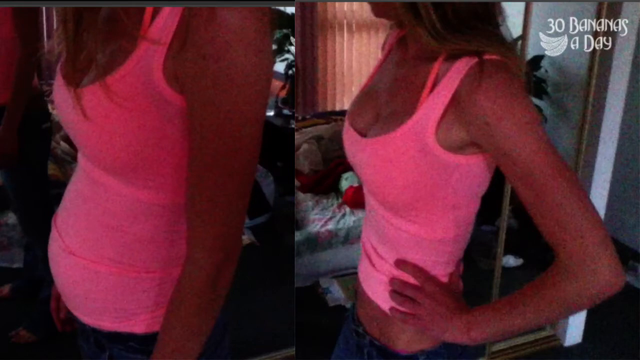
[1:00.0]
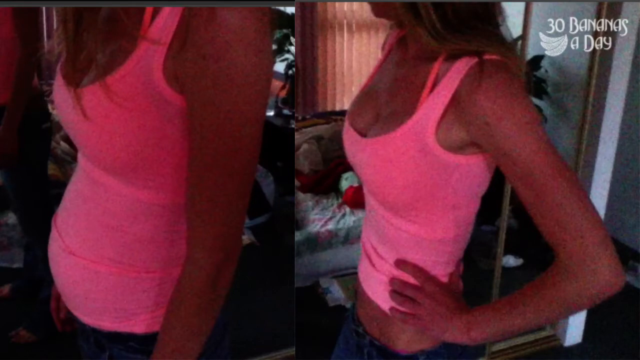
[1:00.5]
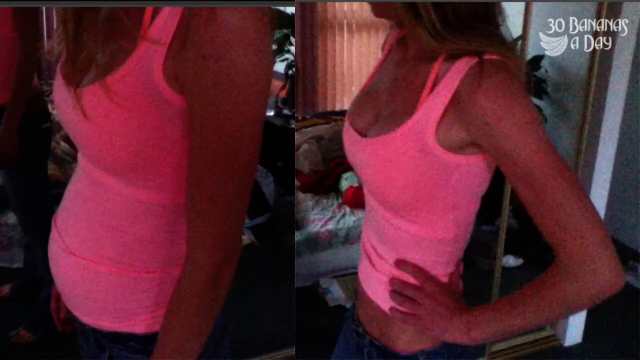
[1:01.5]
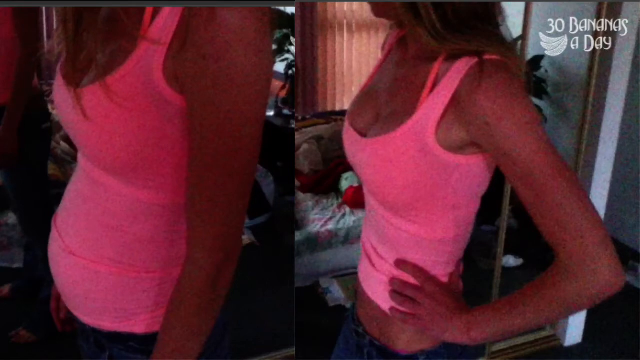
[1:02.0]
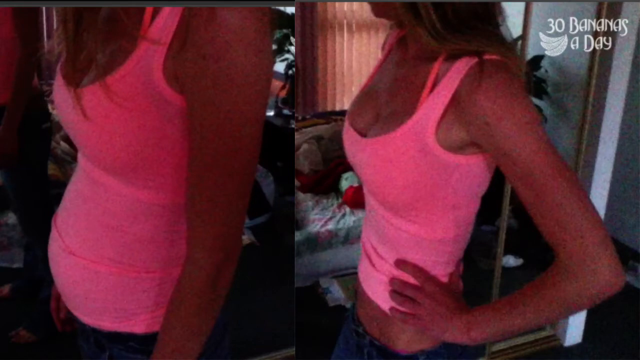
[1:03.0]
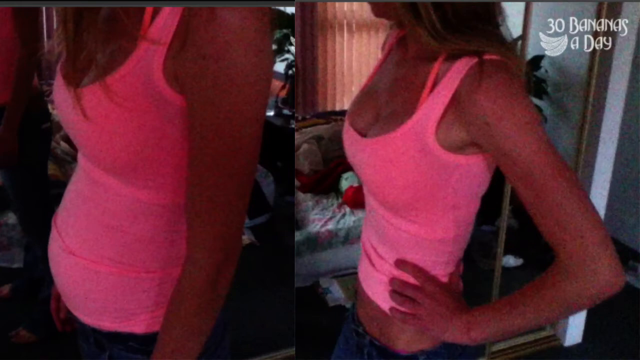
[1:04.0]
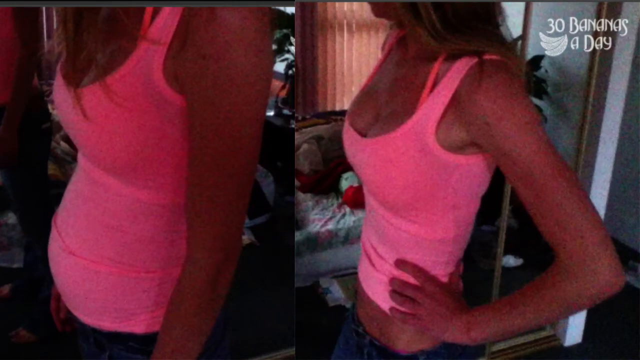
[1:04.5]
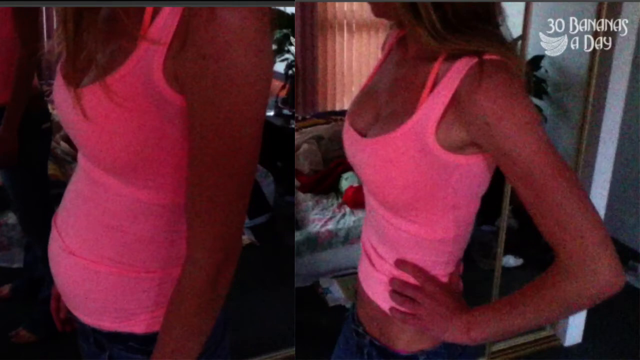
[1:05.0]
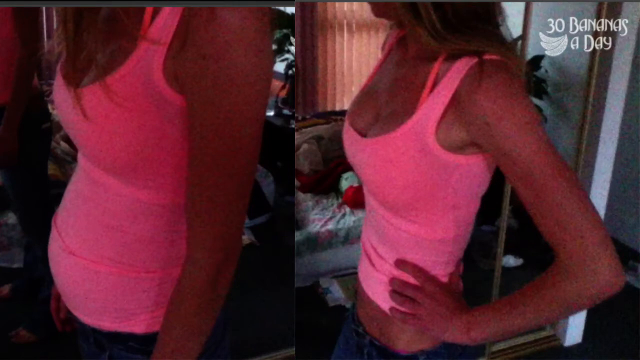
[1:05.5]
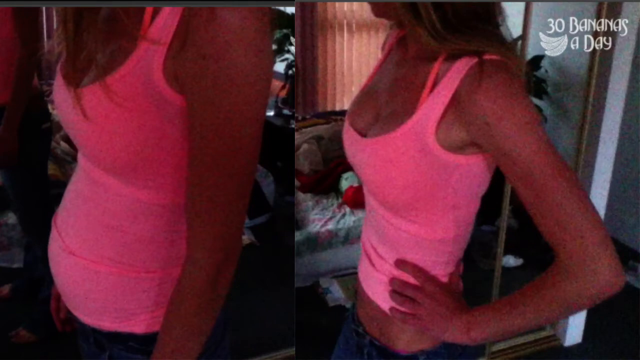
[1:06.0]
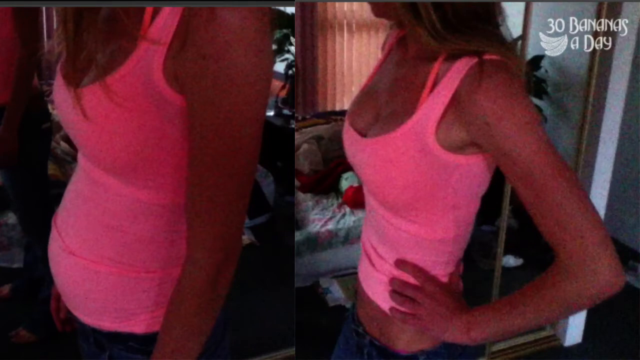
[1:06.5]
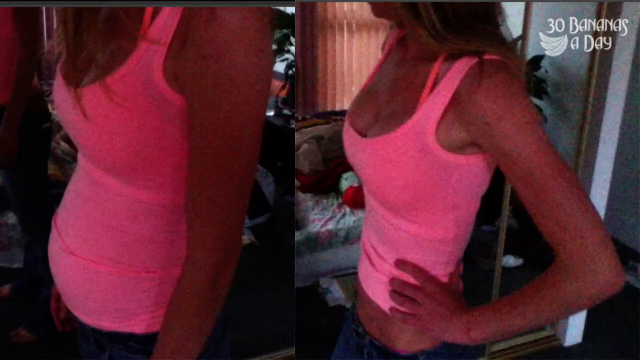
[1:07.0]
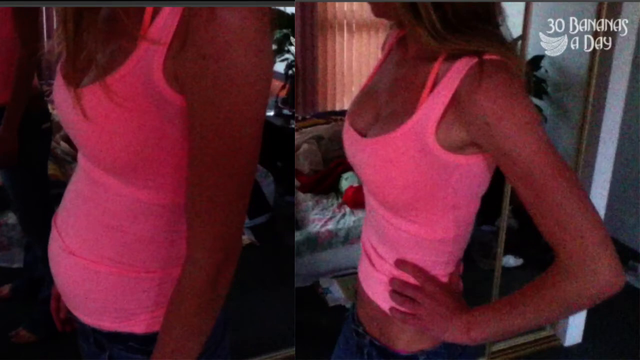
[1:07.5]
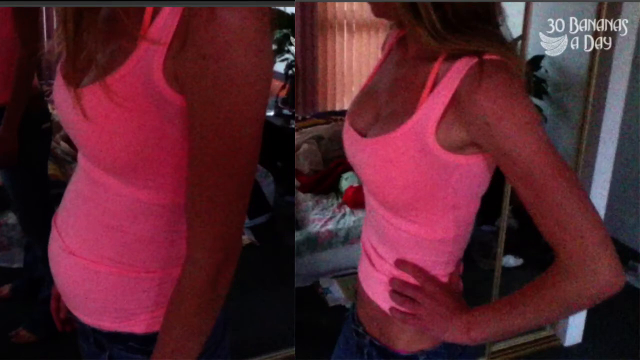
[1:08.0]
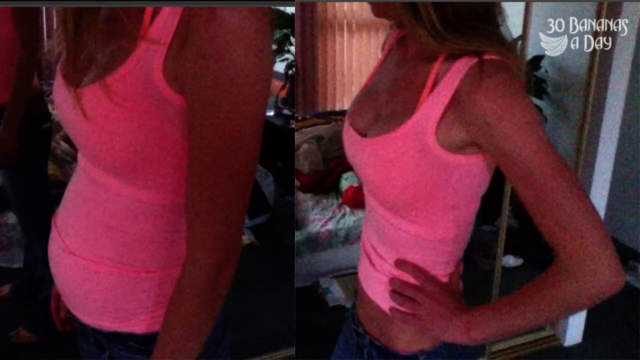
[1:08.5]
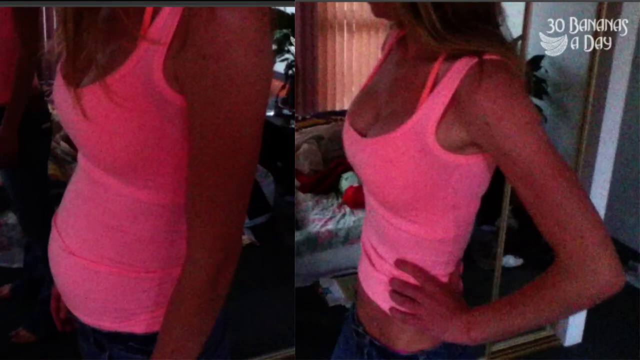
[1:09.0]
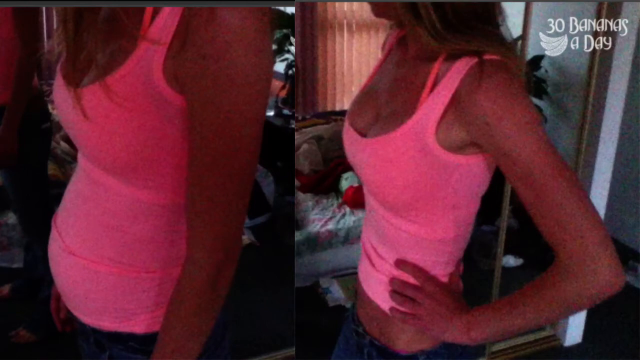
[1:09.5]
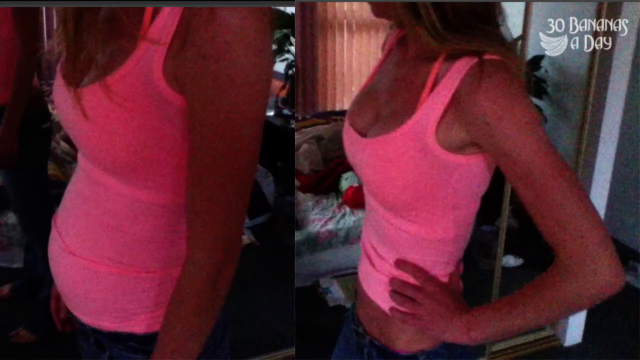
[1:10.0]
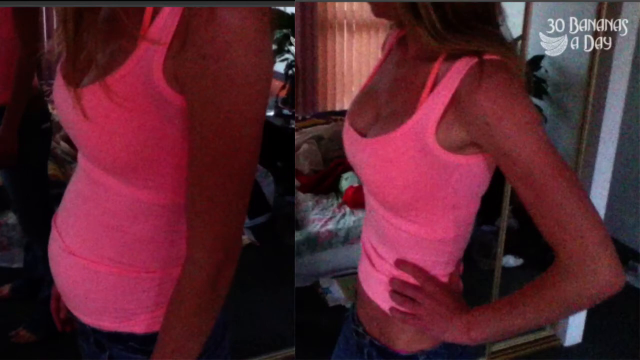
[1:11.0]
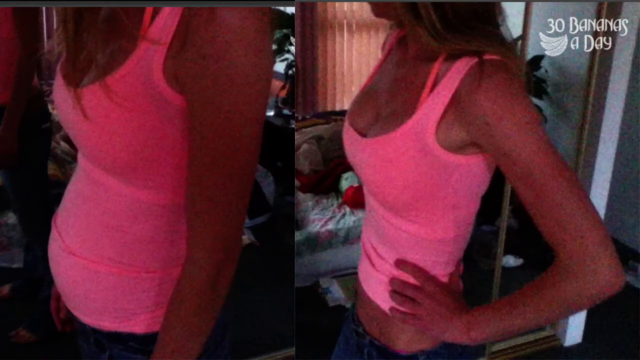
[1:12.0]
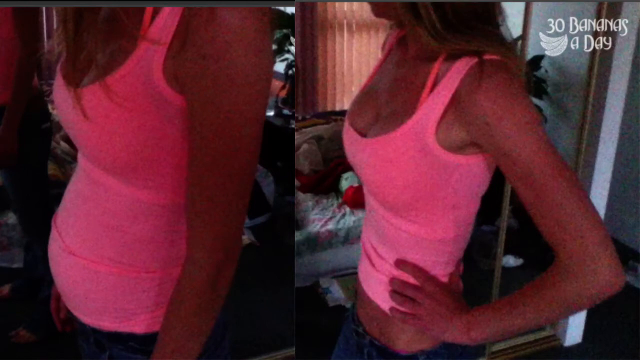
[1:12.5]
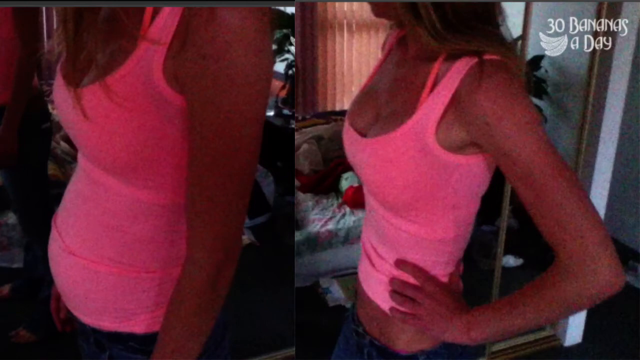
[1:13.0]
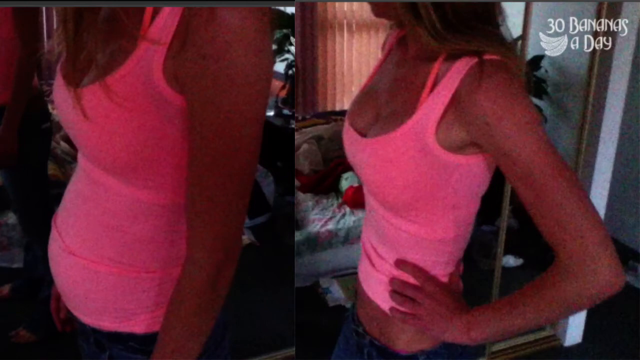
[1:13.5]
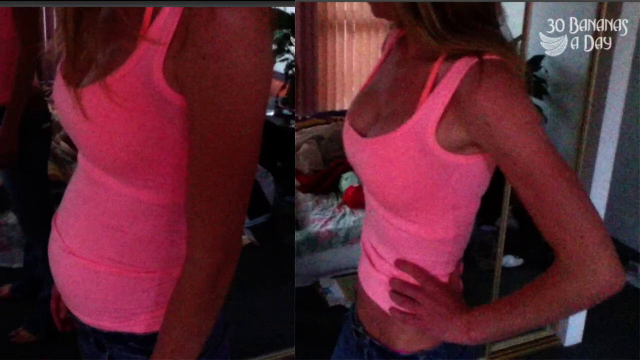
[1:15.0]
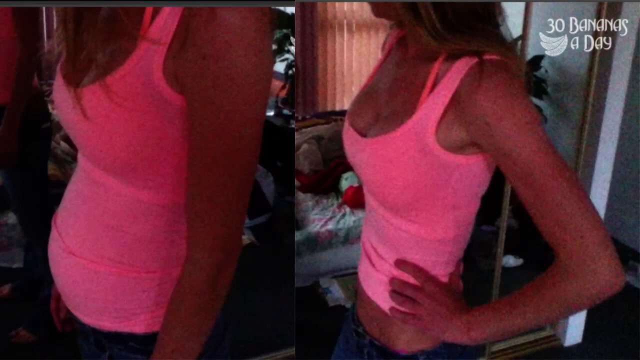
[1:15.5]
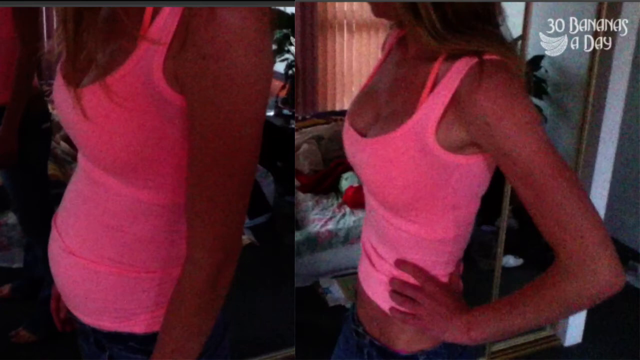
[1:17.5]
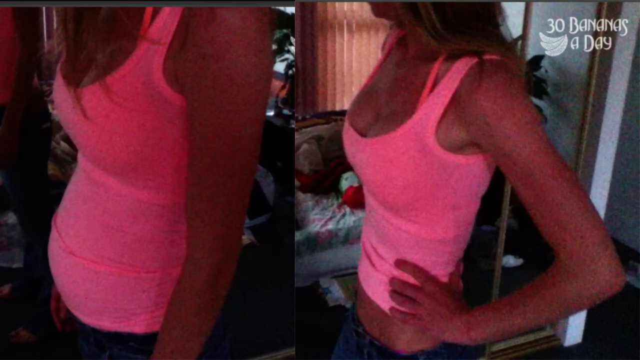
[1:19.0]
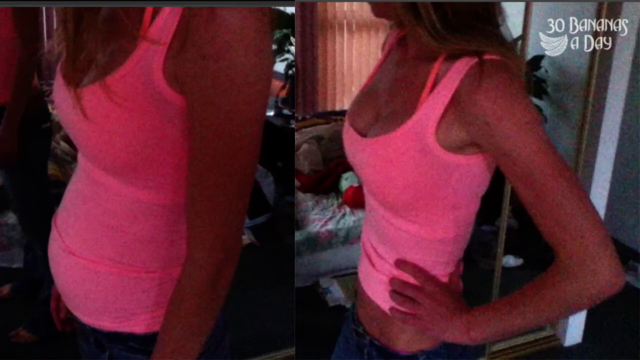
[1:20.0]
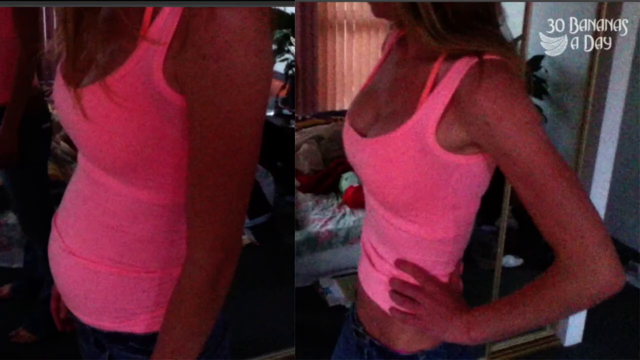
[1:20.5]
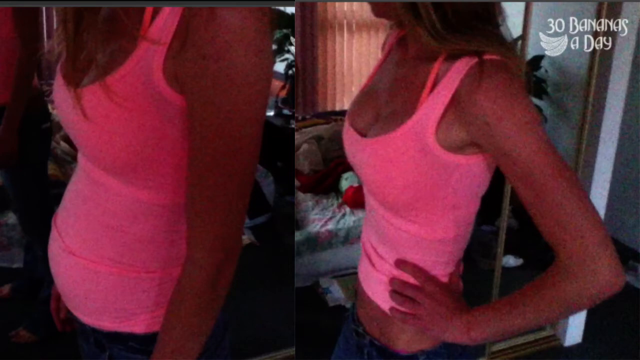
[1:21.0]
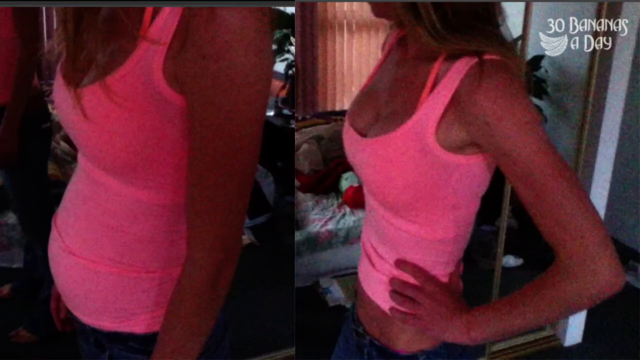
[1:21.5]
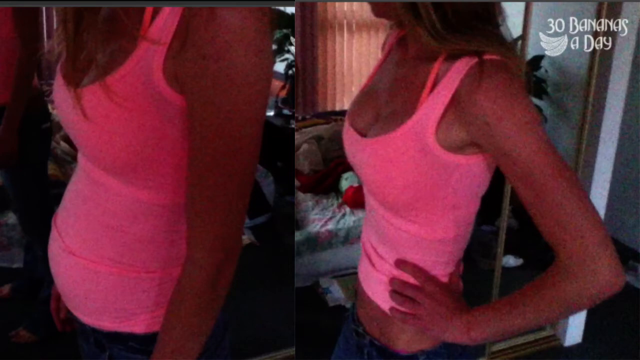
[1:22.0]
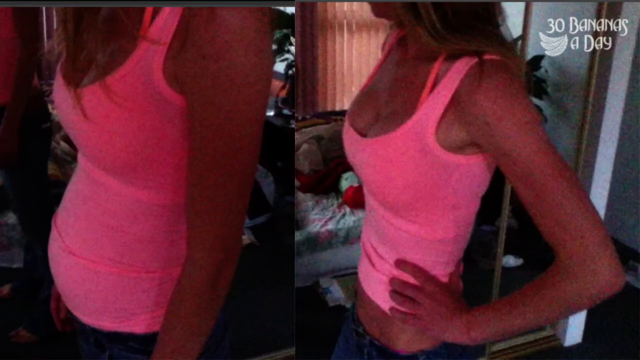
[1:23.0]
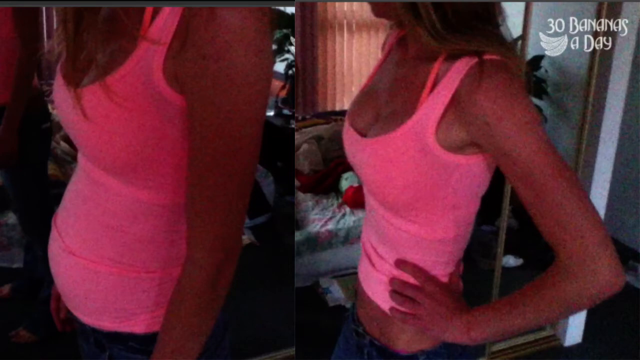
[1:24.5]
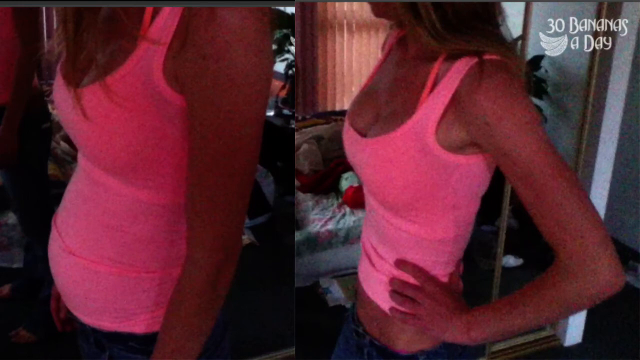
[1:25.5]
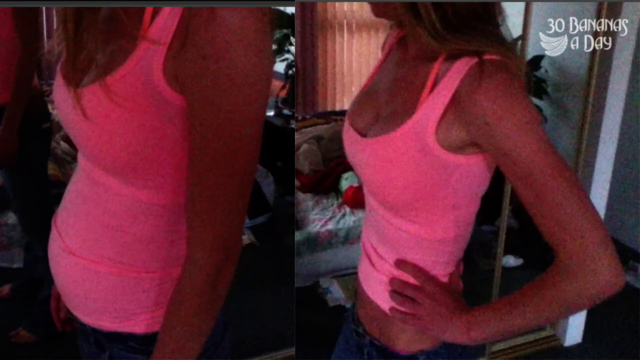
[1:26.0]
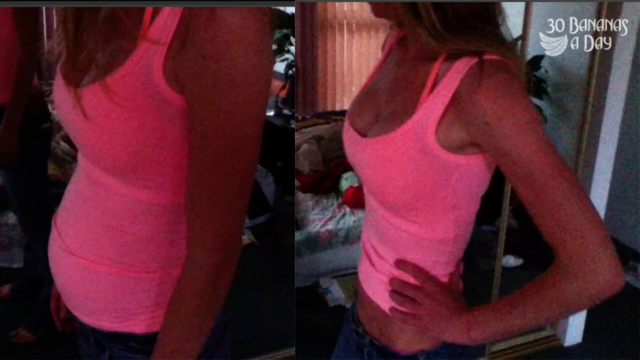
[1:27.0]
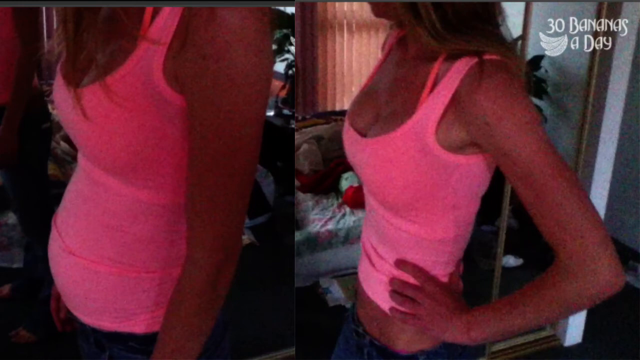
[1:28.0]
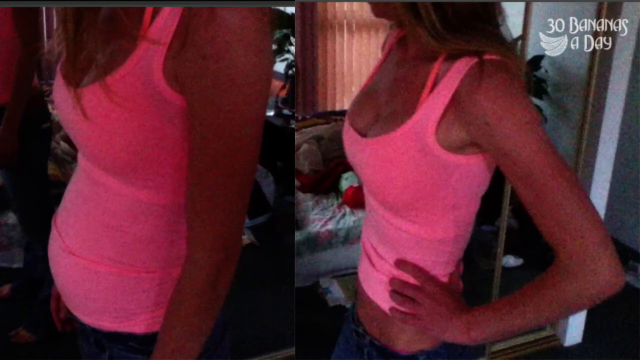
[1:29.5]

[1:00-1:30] The screen shows two images of a white woman, one on the left and one on the right. The image on the right has white text in the top right reading "30 bananas", with three bananas below that, and "a day". She wears a pink crop top with a pink strap around her neck and blue jeans, and has long brown hair and a white complexion. A mirror is on her left side, reflecting a white bed with clothing strewn all over it and light brown shutters on the window. There is a blue carpet and a white wall on the right side. The left image shows the same woman in the pink crop top and blue jeans, with long brown hair. In the left image she has a bit of a pouty tummy, while in the right image her stomach is more slimmed down.